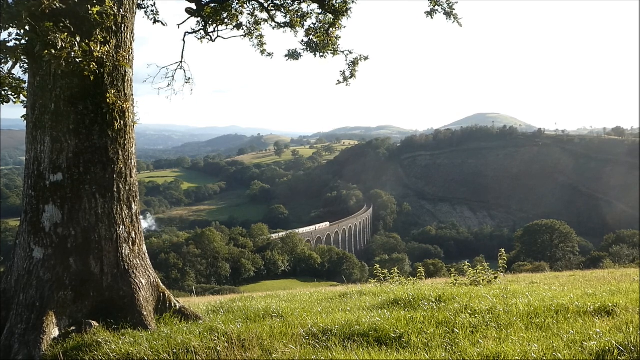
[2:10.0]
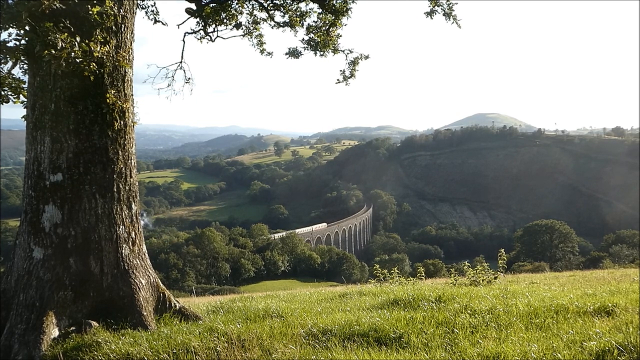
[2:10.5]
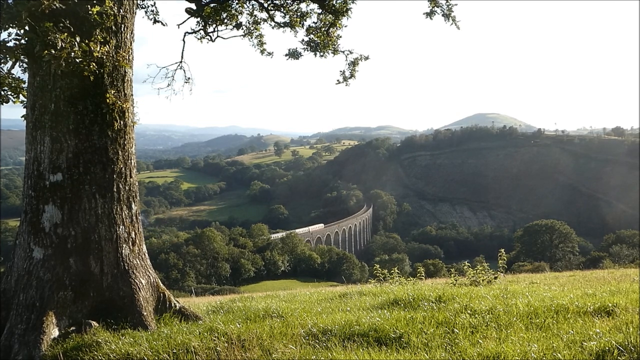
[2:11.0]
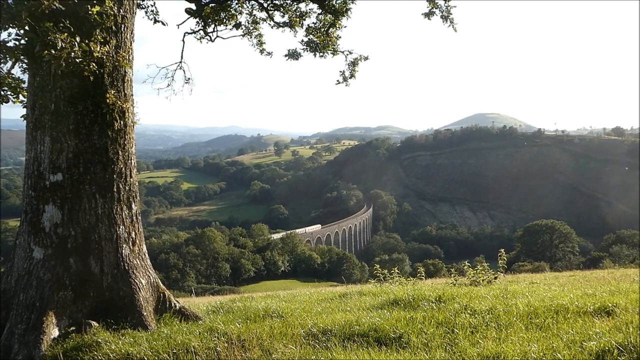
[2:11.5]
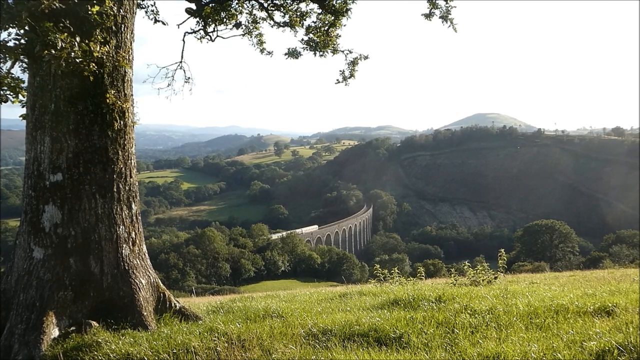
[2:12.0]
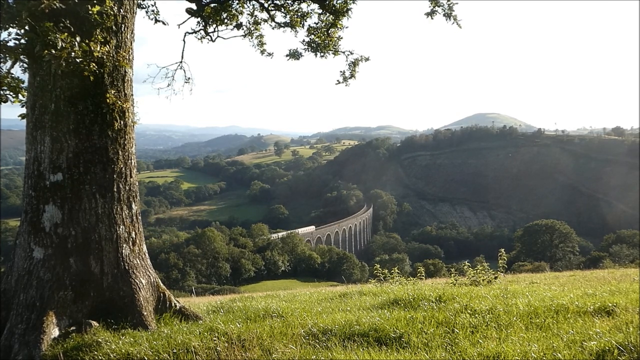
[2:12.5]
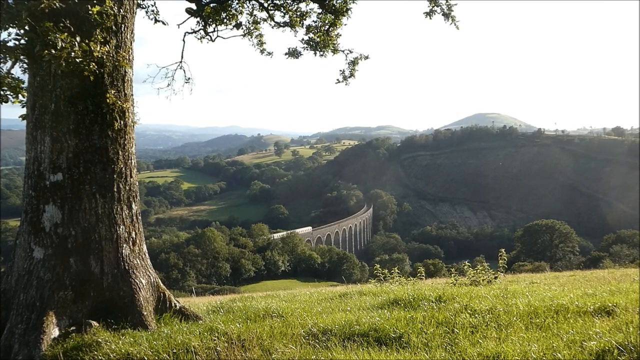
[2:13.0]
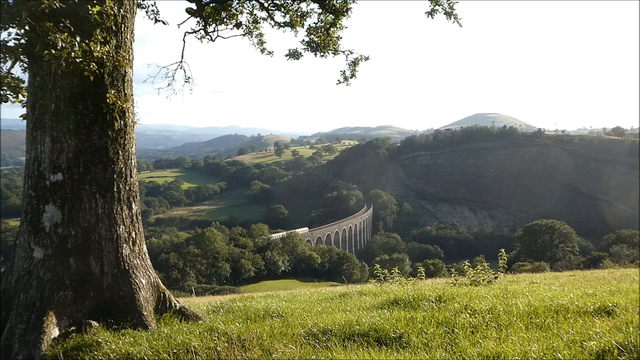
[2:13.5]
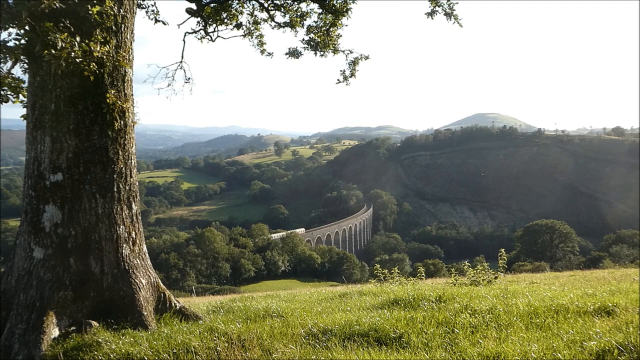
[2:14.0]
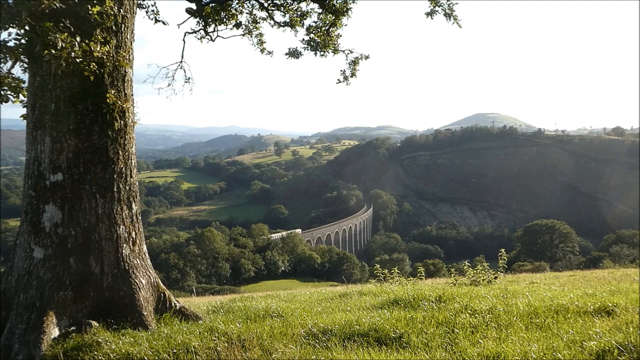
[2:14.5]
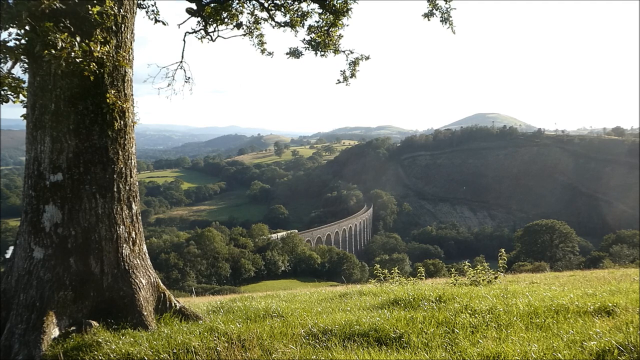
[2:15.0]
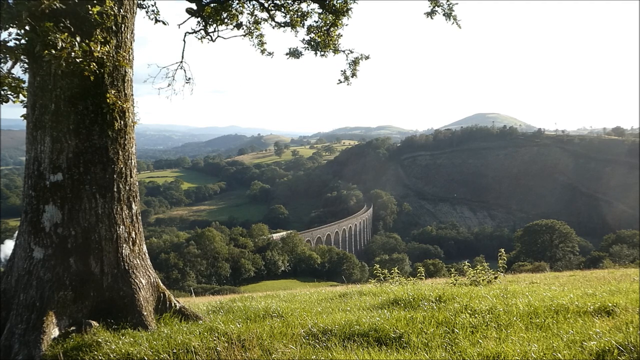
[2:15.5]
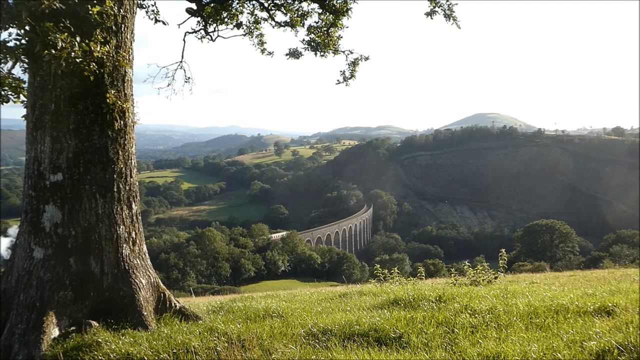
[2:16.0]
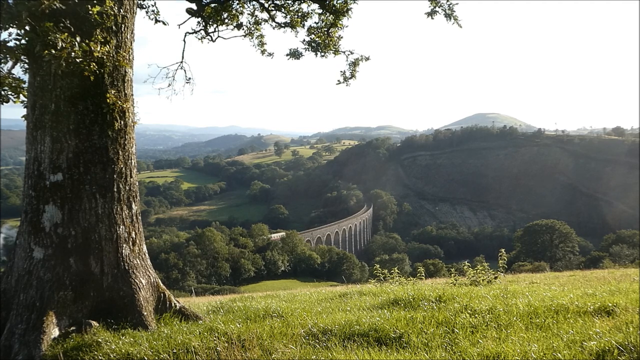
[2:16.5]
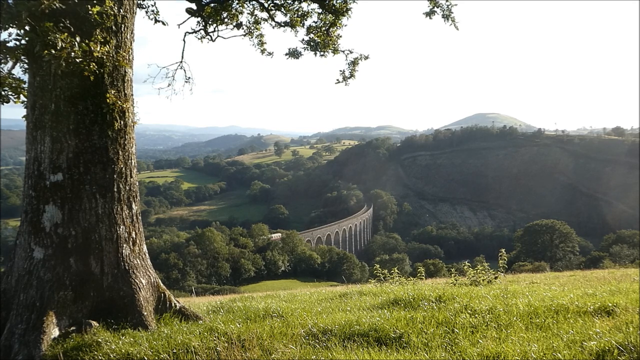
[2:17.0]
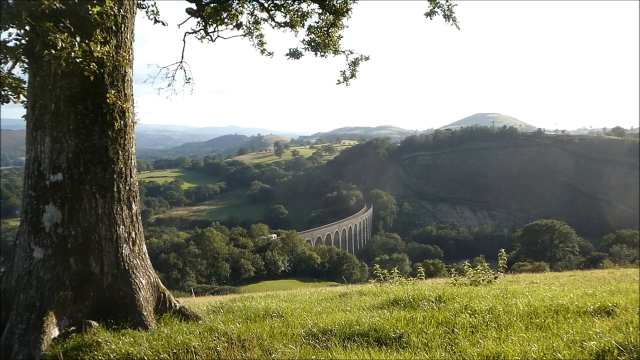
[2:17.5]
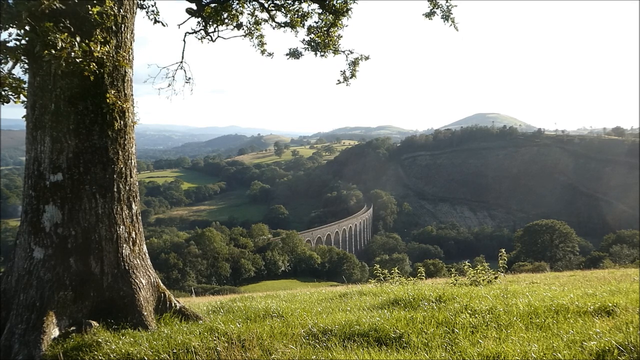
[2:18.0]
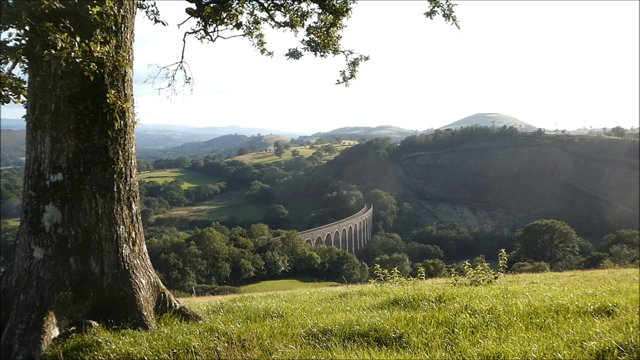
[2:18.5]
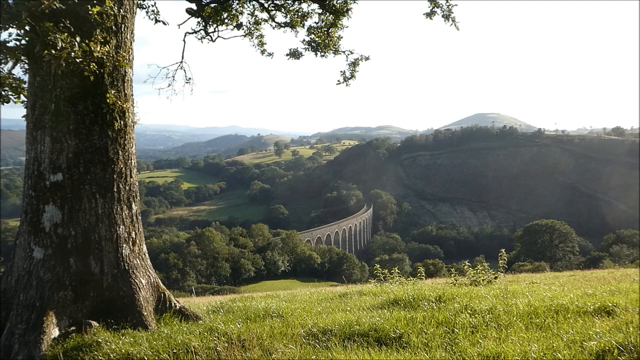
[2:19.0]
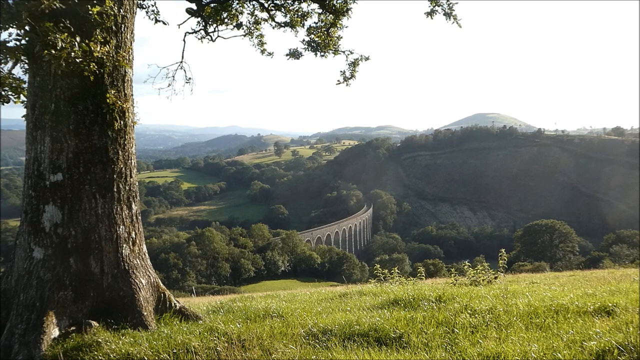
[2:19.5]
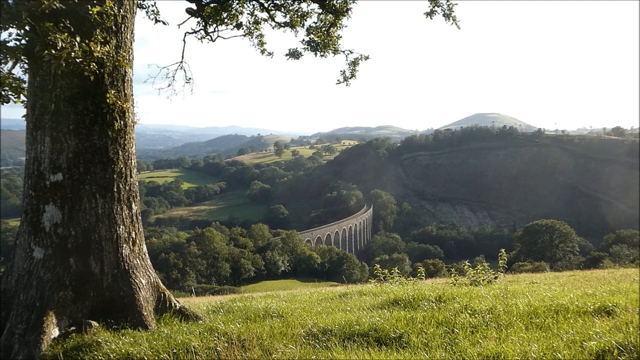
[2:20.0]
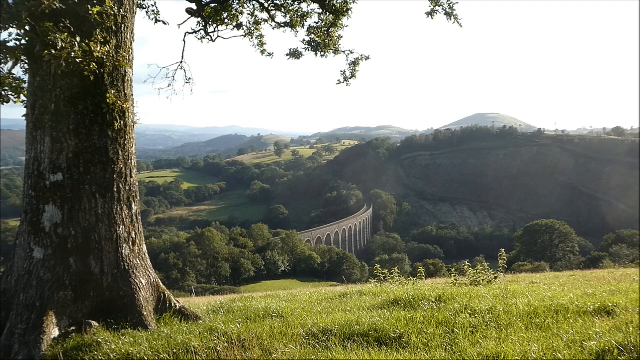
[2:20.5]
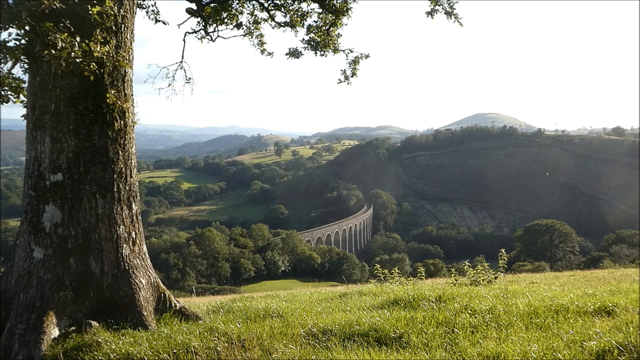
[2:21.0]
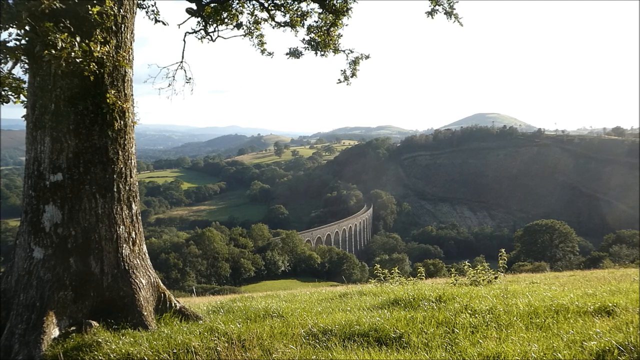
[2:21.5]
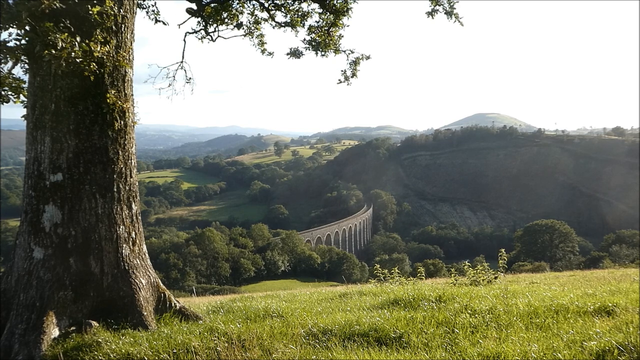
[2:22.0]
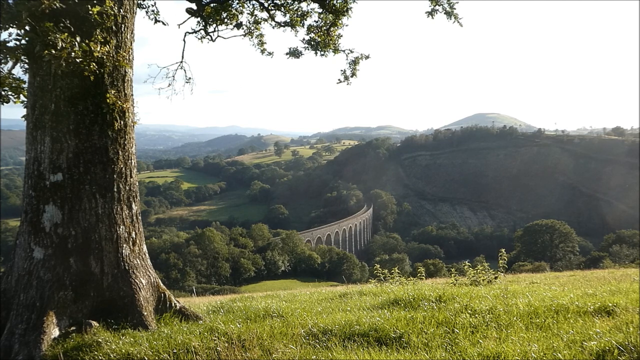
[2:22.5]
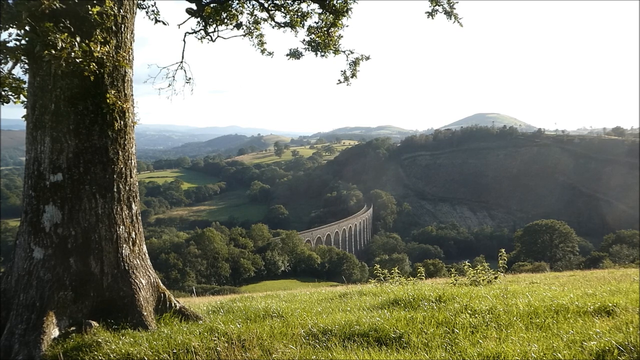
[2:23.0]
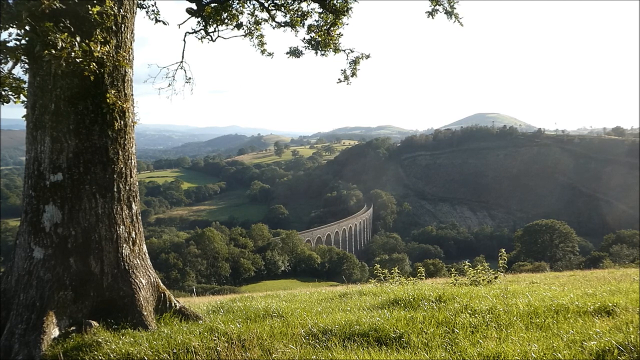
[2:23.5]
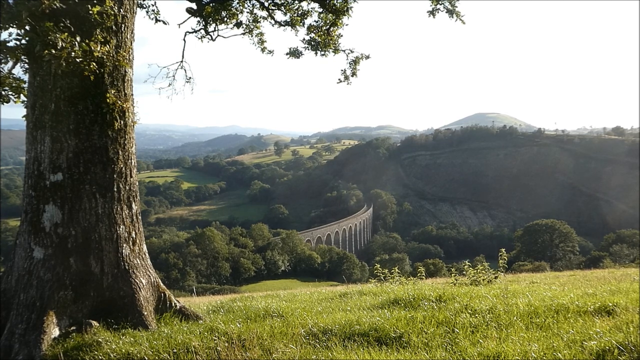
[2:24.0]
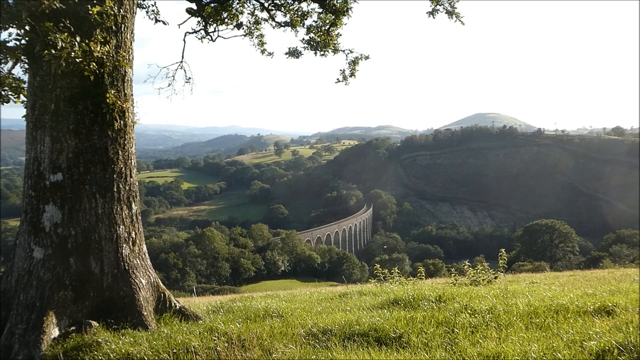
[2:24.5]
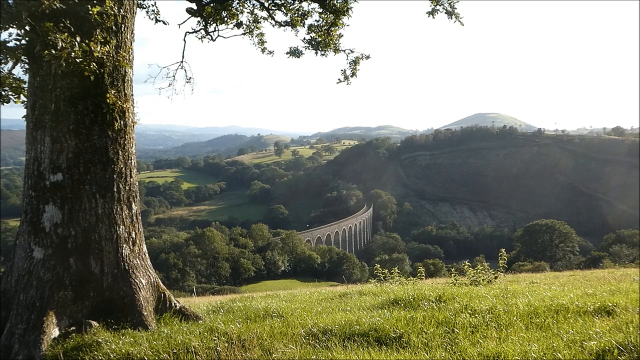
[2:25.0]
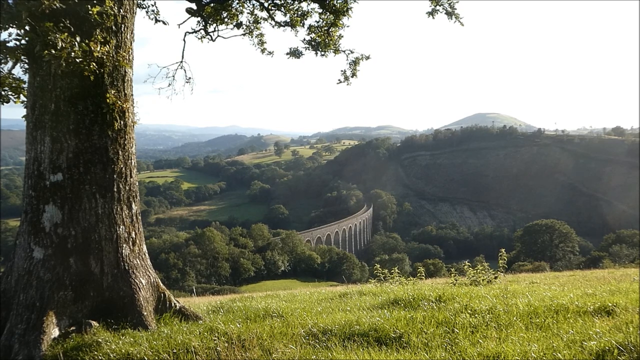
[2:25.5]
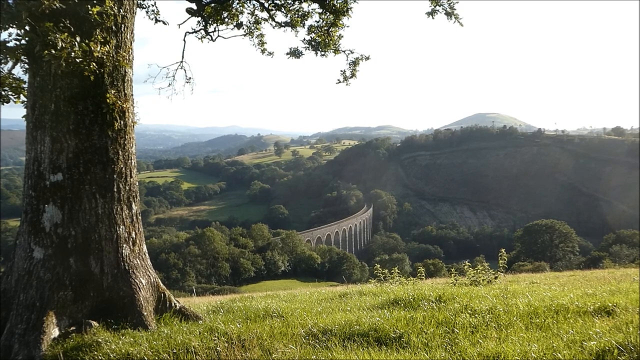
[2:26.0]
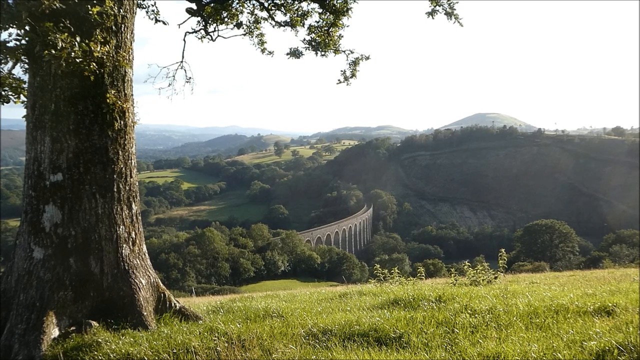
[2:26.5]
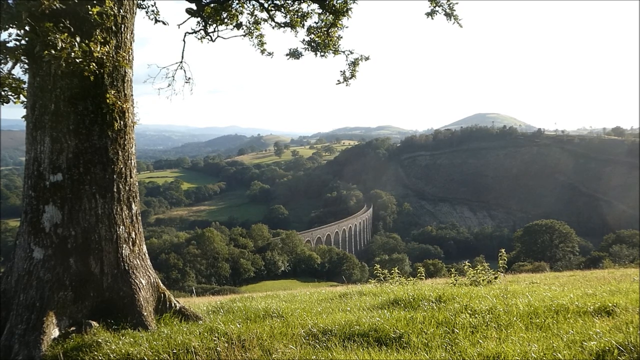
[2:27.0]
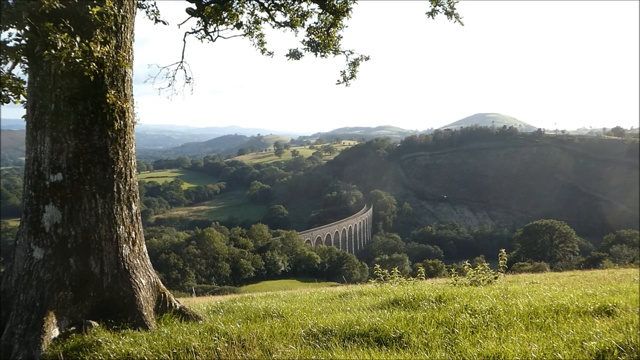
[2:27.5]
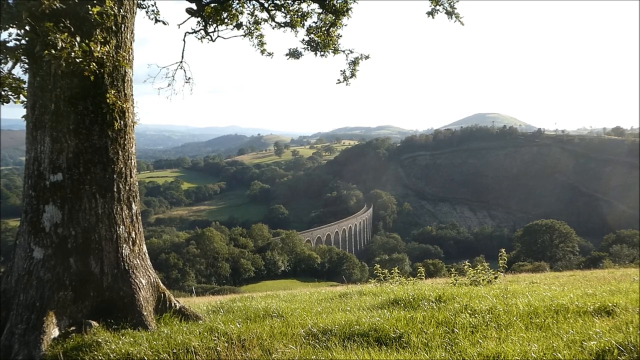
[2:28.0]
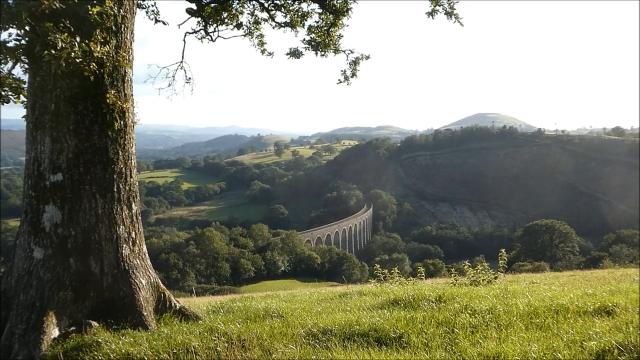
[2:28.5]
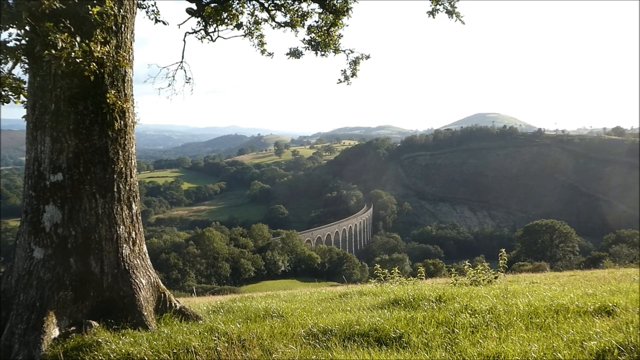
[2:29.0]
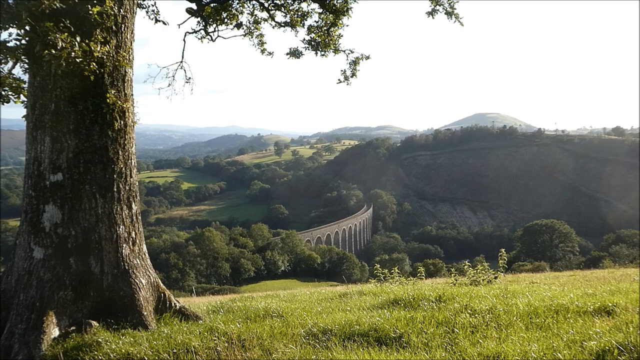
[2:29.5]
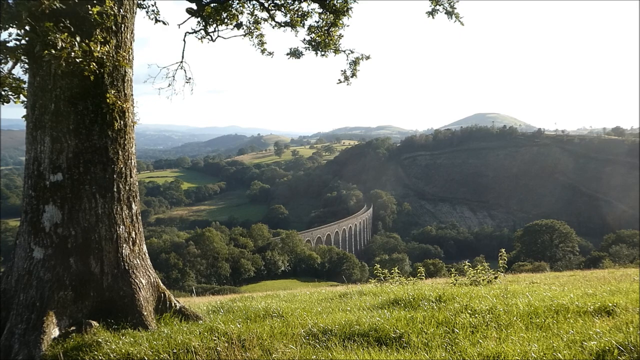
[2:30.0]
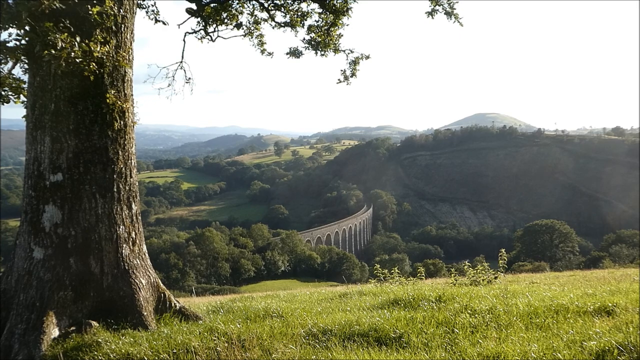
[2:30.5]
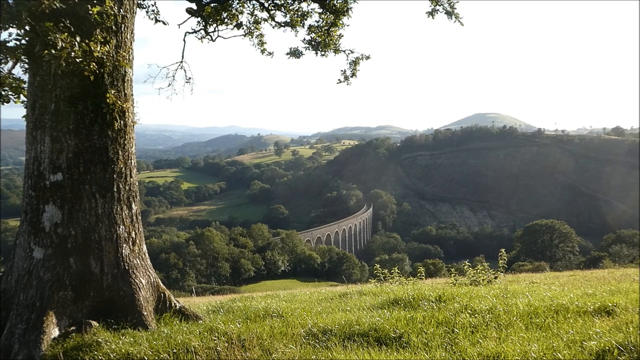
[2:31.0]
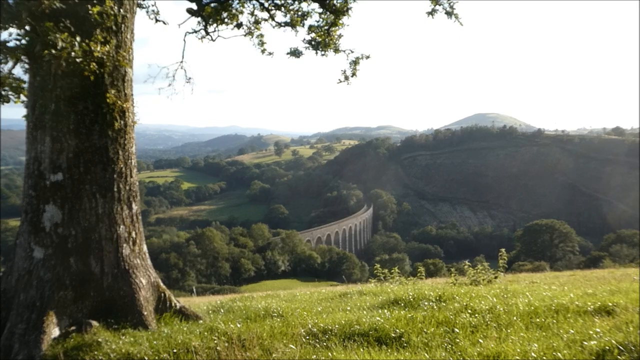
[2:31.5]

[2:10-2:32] The very tail end of the smoke trail is on the right-hand side of the tree trunk, next to the tree shrubs, while on the left-hand side a little sliver of the background is visible along with the train passing through. The train's passage shows only through a huge cloud of smoke from the front of the train, followed by the tail-end smoke continuing along. On the bridge, about maybe a quarter of the train, maybe a little more, continues to drive, and then it fully disappears, leaving a still view of nature. Little bugs seem to be flying around, two maybe three in particular, and everything else is still.